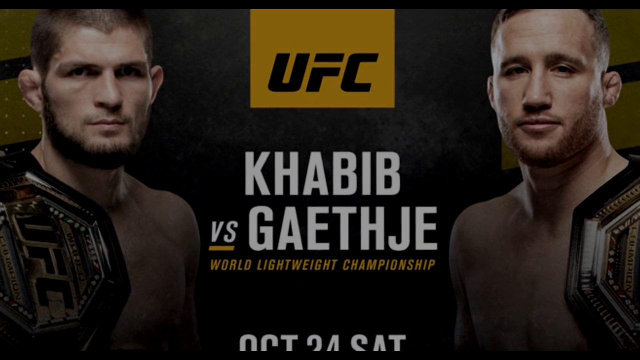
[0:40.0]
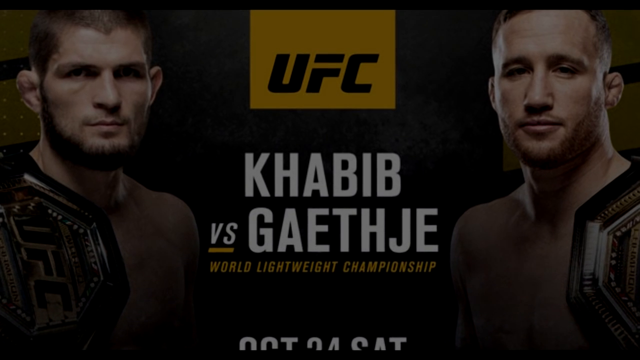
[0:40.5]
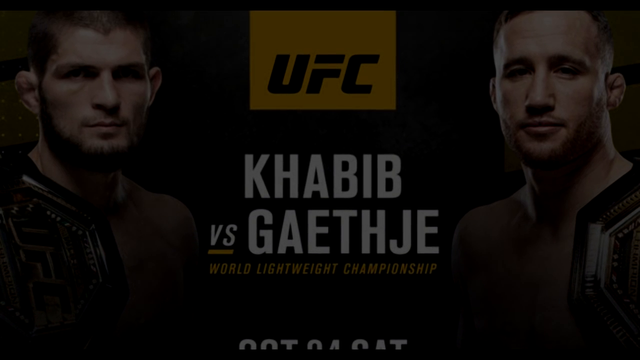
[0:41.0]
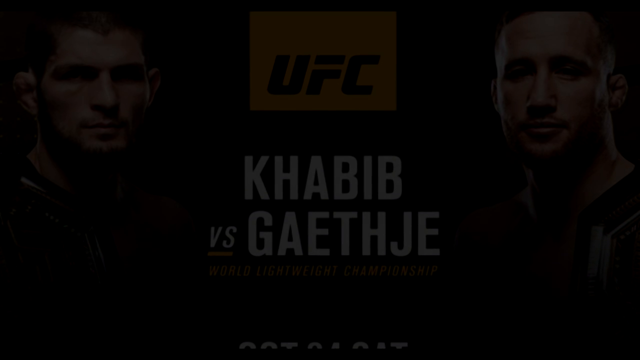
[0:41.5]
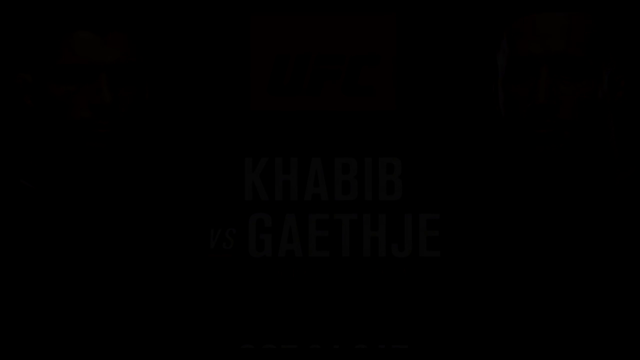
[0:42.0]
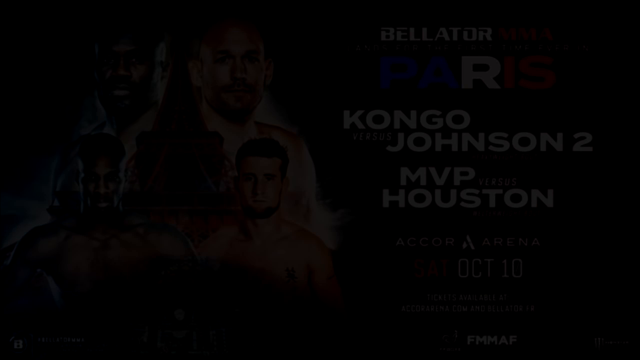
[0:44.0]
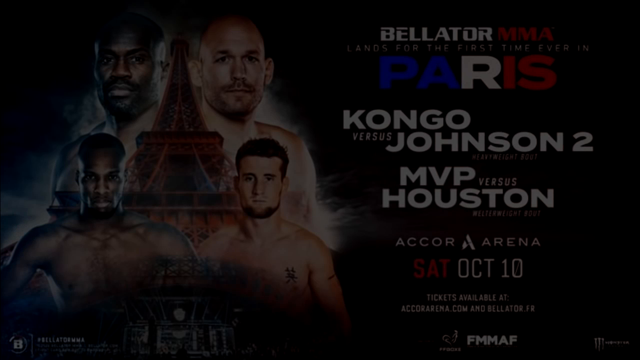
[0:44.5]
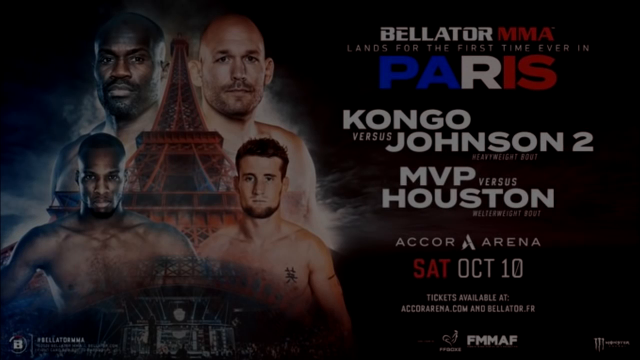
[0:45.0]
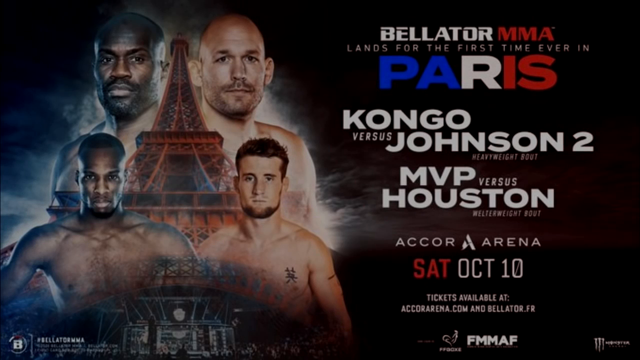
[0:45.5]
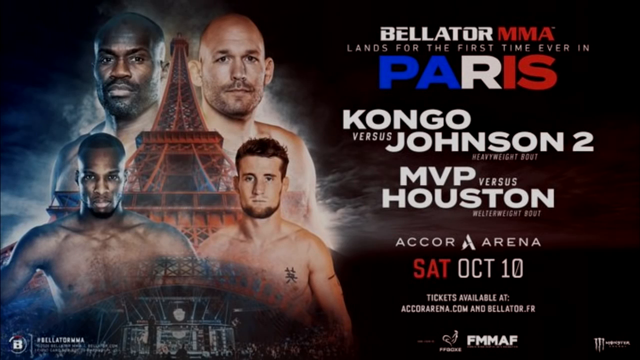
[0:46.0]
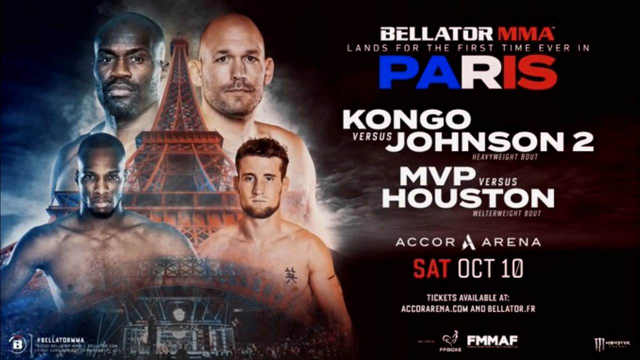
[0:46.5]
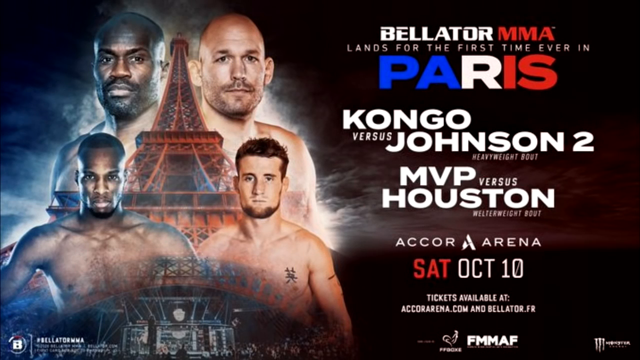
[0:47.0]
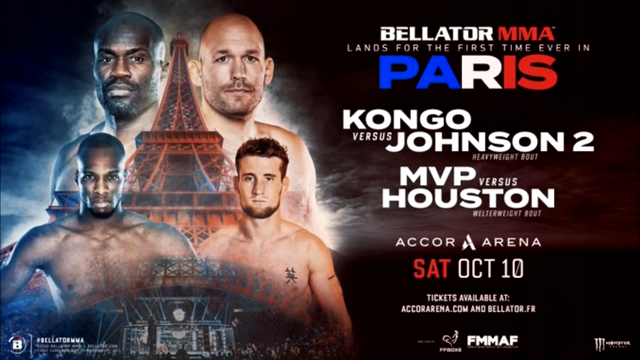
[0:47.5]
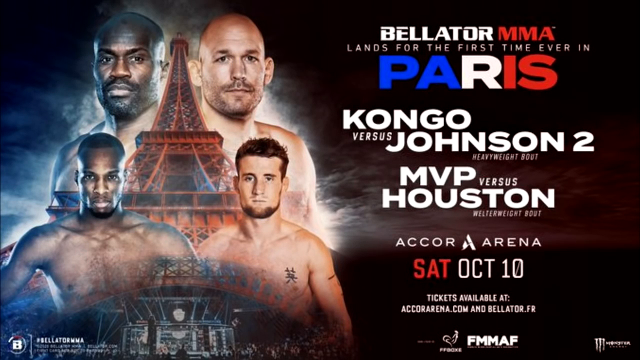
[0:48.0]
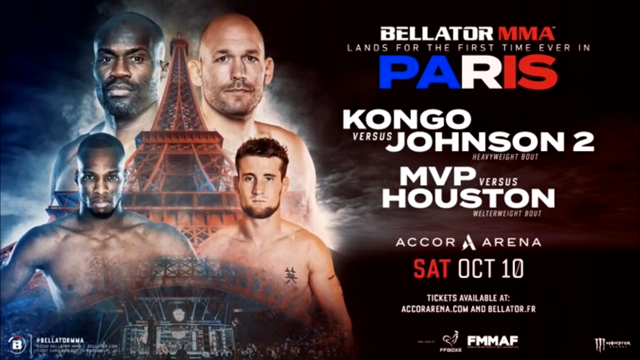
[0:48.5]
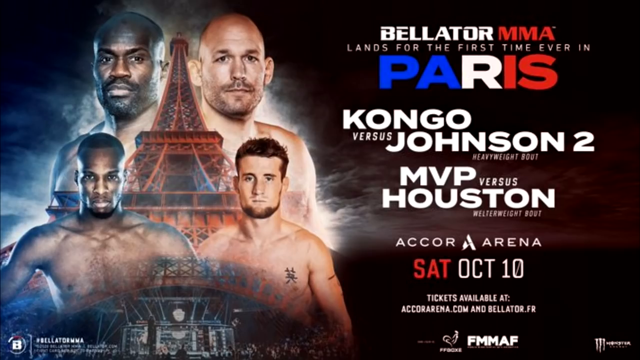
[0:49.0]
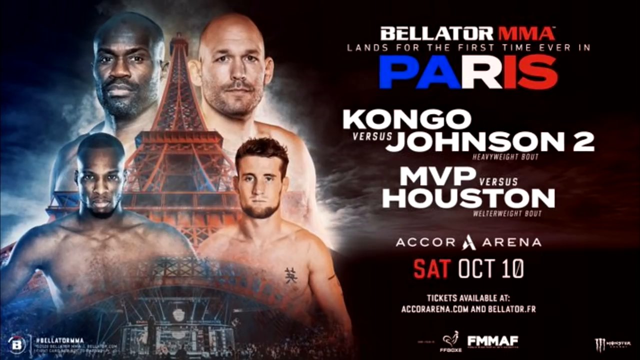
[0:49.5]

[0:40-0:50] The video, wider than it is tall, starts with a UFC promotional slide. "UFC" appears at the top in black within a small yellow rectangle. Below, white capital letters read "Khabib versus" followed by a name spelled G-A-E-T-H-J-E, and below that, smaller yellow capital letters read "World Lightweight Champion." Two men, Khabib on the left and the other fighter on the right, face the viewer with neutral expressions, each with a belt on his outside shoulder. The screen then goes black, and four fighters appear on the left, two Black men and two white men, with the Eiffel Tower between them and something like energy or light radiating out from them. On the right-hand side, text reads: "Bellator MMA lands for the first time ever in Paris. Congo versus Johnson 2. MVP versus Houston. Acura Arena, Saturday, October 10th. Tickets available at acurarena.com and Bellator."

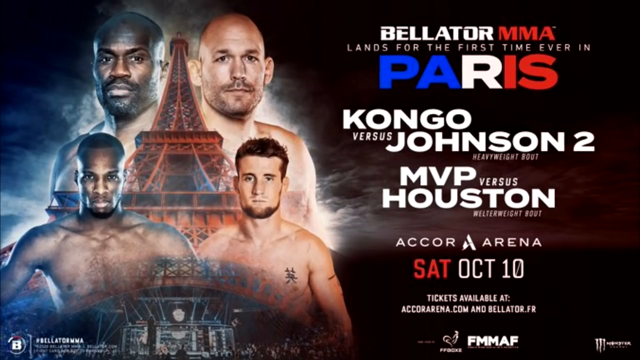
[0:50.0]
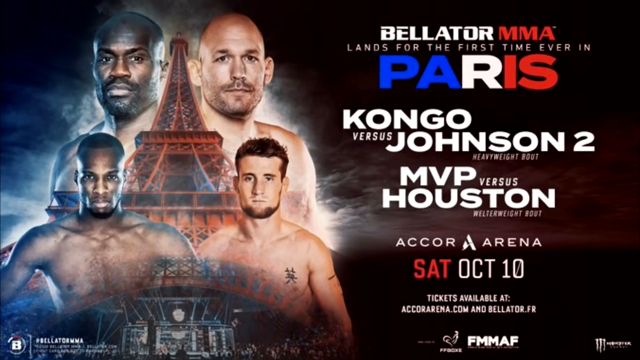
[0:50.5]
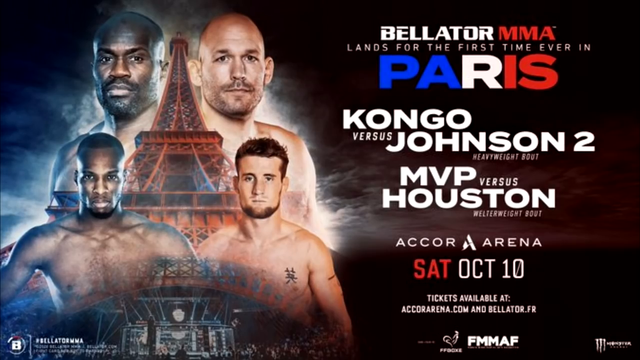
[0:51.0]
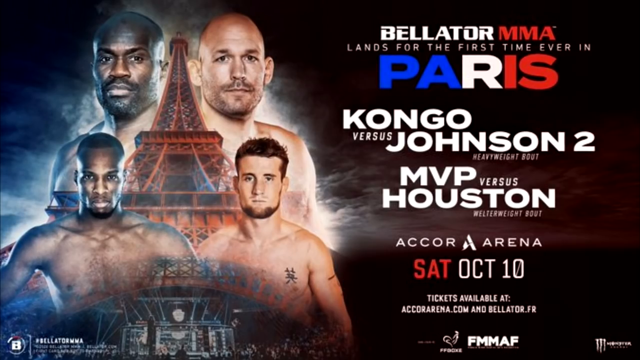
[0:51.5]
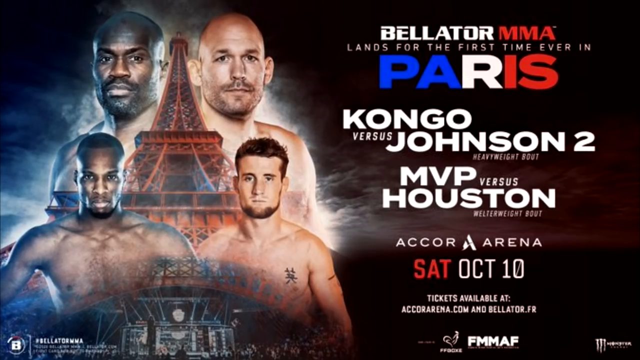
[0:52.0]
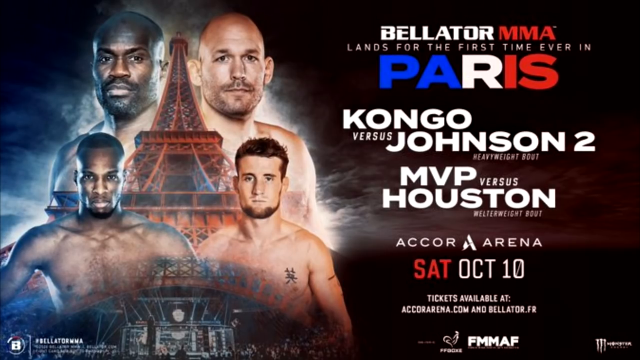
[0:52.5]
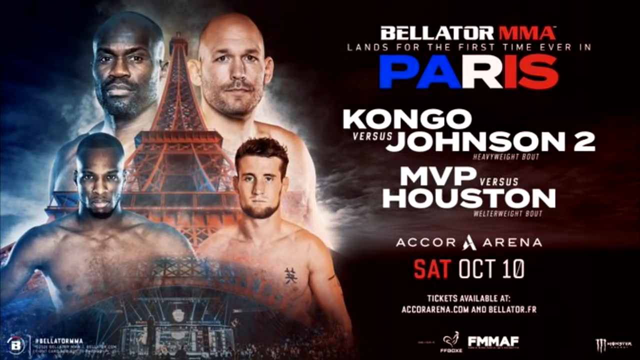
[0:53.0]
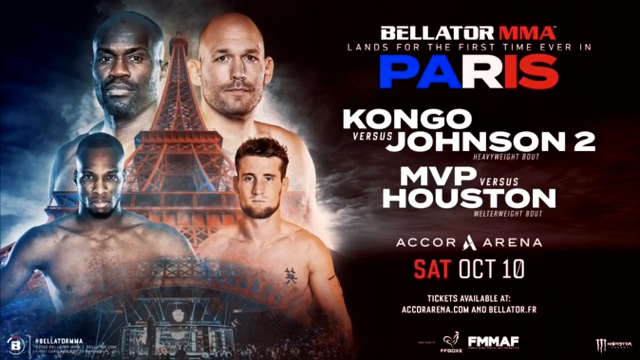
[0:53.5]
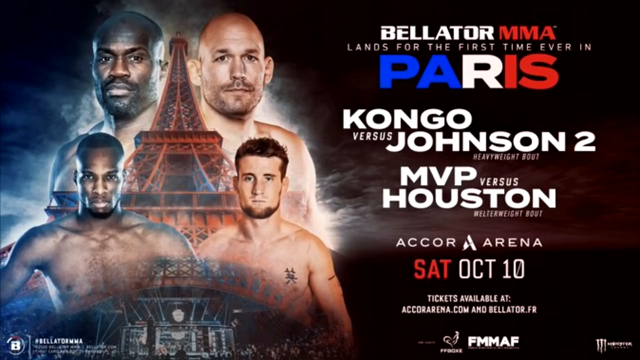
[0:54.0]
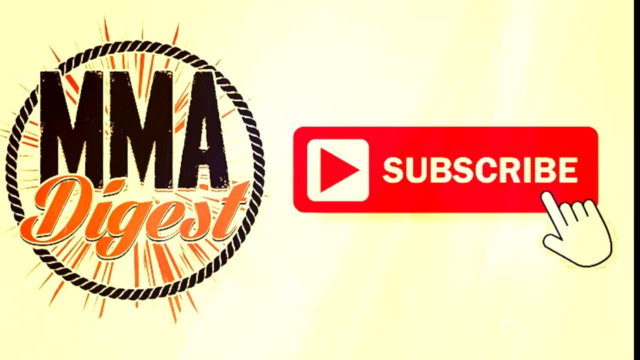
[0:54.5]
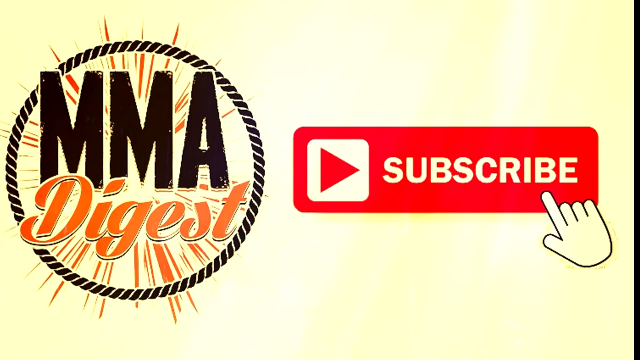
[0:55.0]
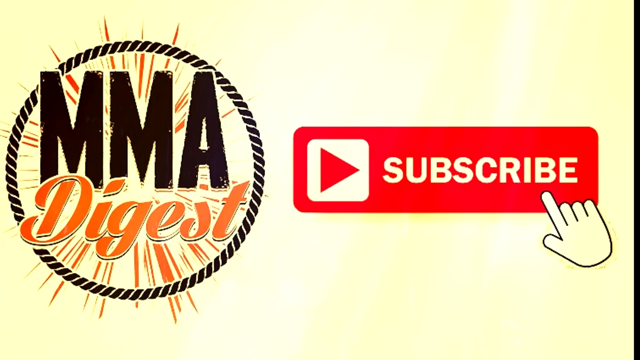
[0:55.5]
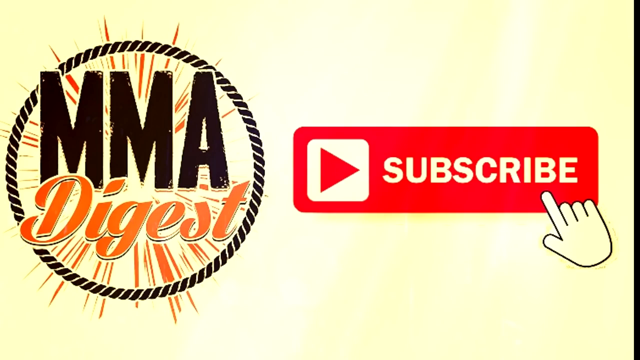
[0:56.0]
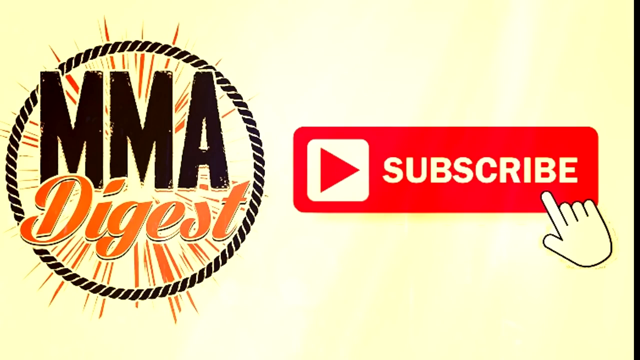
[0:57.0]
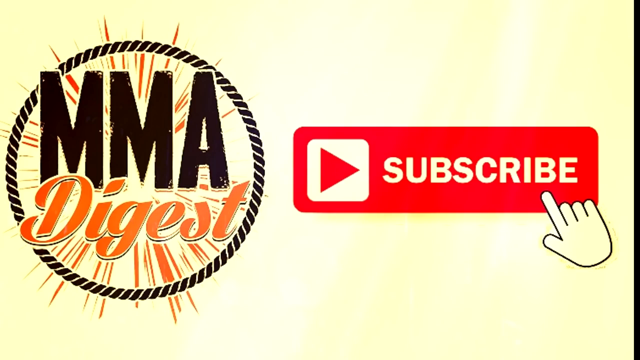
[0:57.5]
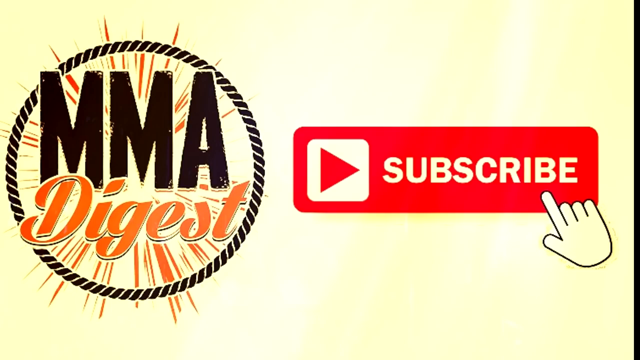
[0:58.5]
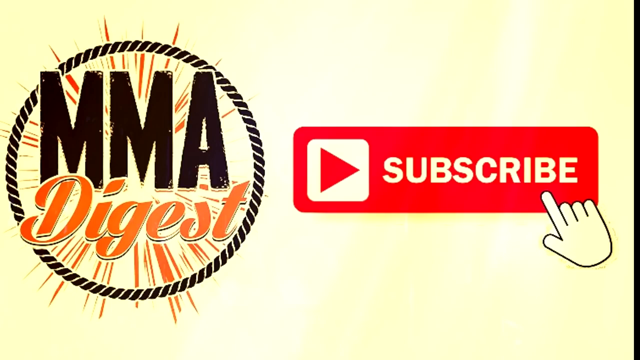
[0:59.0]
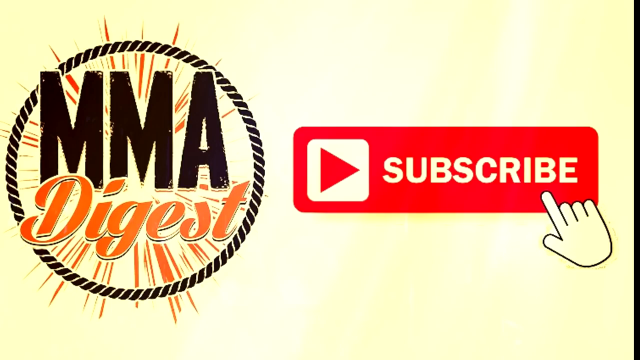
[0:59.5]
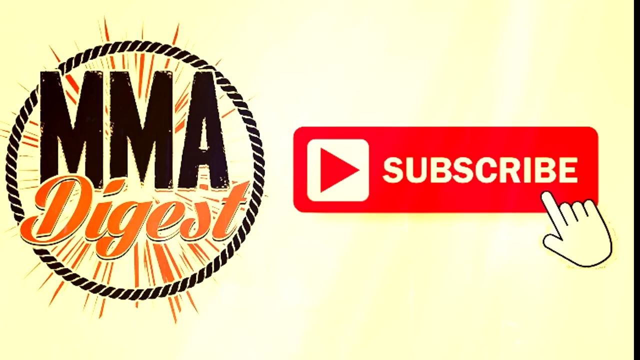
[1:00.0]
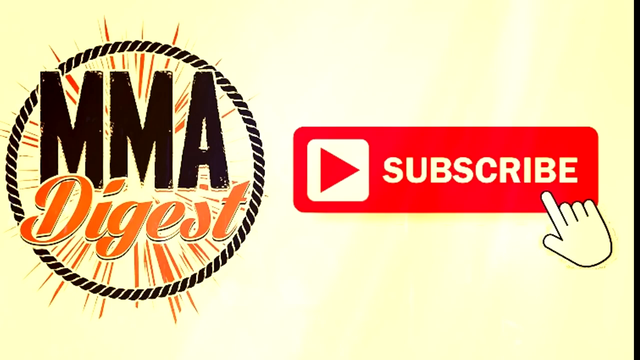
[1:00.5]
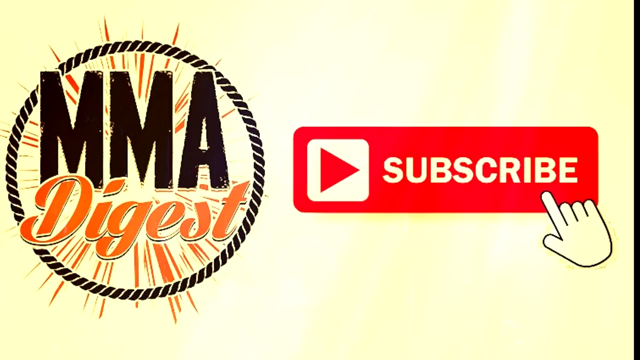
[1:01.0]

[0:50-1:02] Four shirtless fighters face the viewer, two Black men on the left and two white men on the right, with the Eiffel Tower between them and light radiating from around all of them. Text on the right-hand side reads: "Bellator MMA lands for the first time ever in Paris. Congo versus Johnson 2, MVP versus Houston, Aqua Arena, Saturday, October 10th. Tickets available at aquarena.com and Bellator." The video then moves to a light yellow screen with "MMA Digest" on the left and a red subscribe button on the right, with a little hand in the lower right-hand corner that looks like it is clicking it.